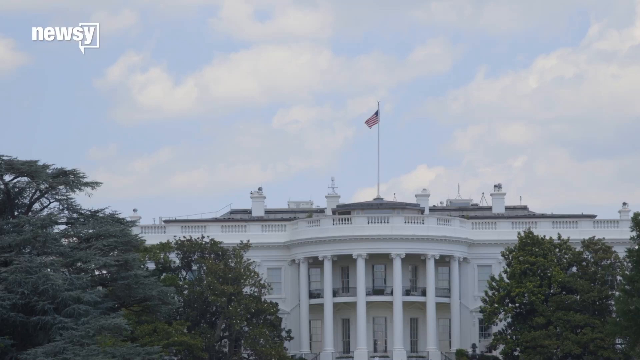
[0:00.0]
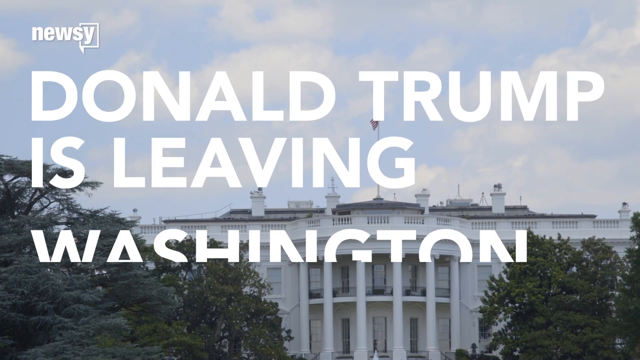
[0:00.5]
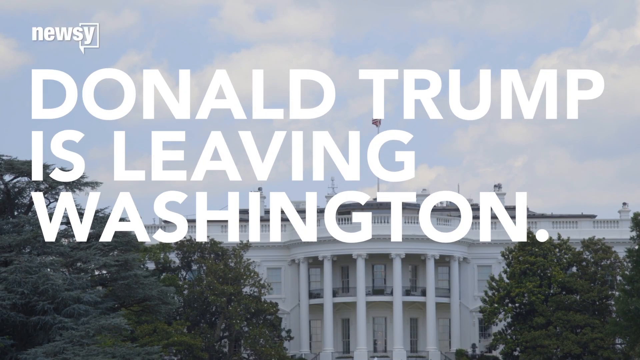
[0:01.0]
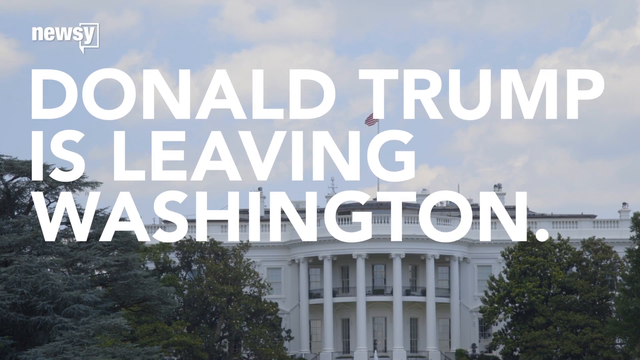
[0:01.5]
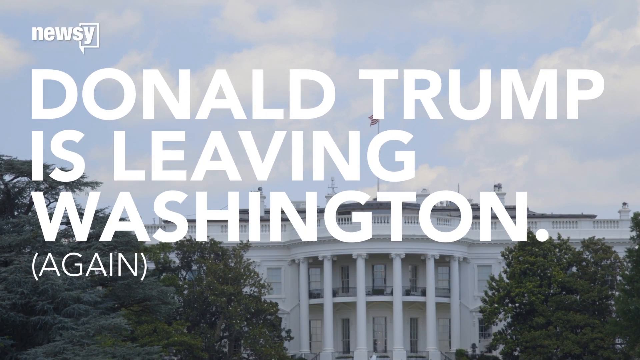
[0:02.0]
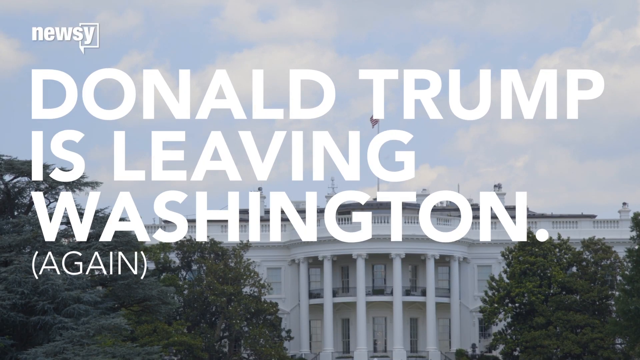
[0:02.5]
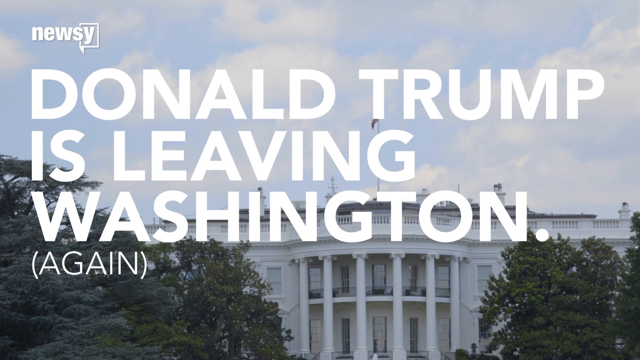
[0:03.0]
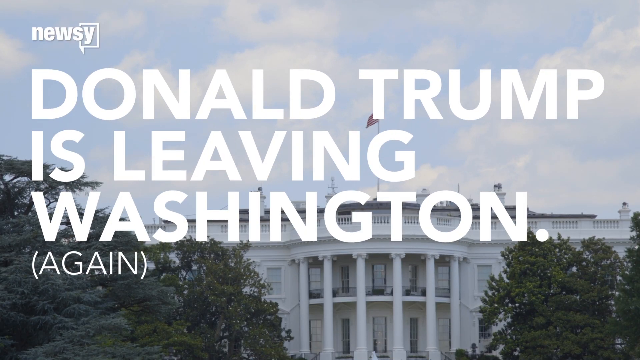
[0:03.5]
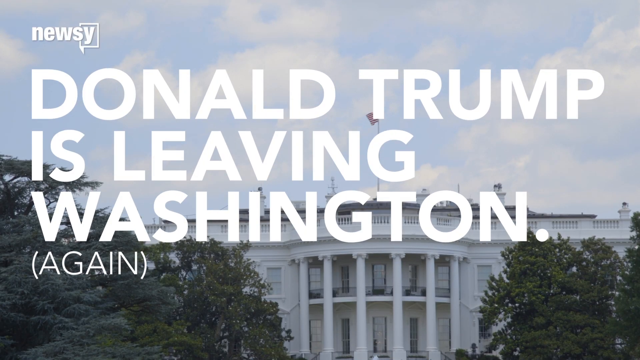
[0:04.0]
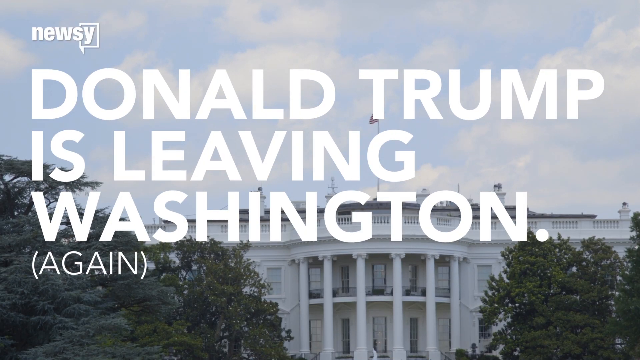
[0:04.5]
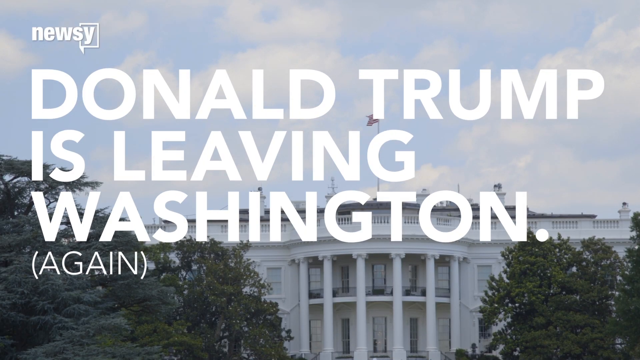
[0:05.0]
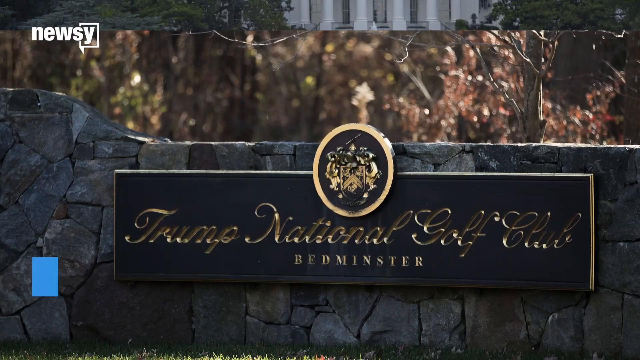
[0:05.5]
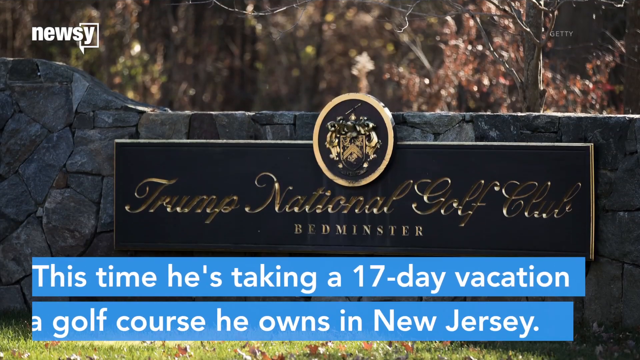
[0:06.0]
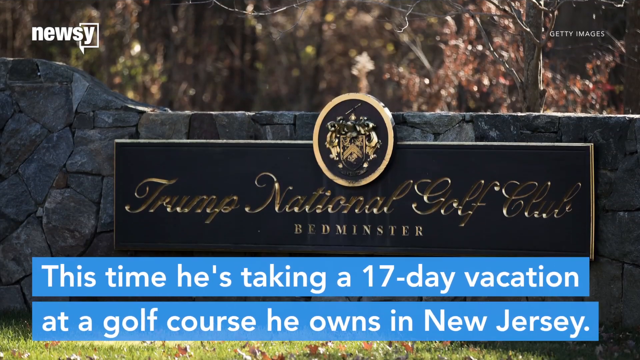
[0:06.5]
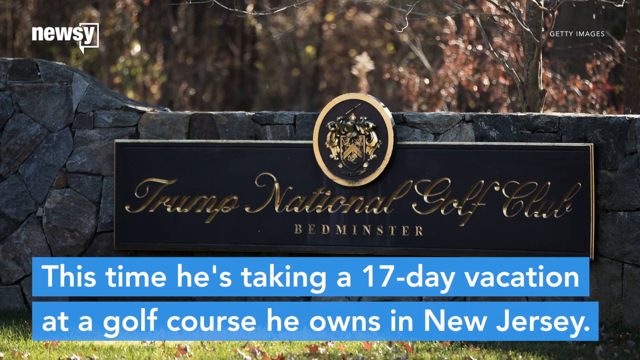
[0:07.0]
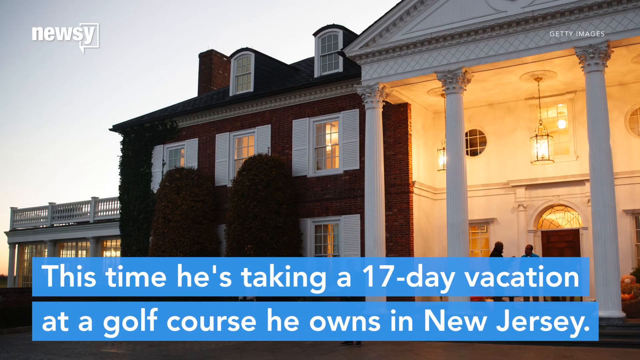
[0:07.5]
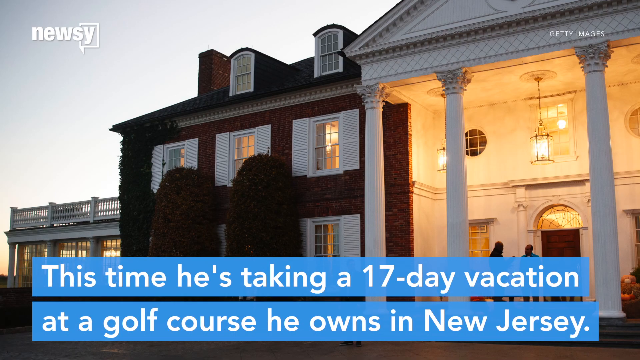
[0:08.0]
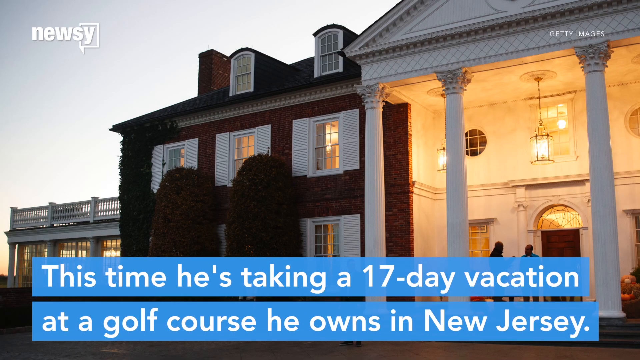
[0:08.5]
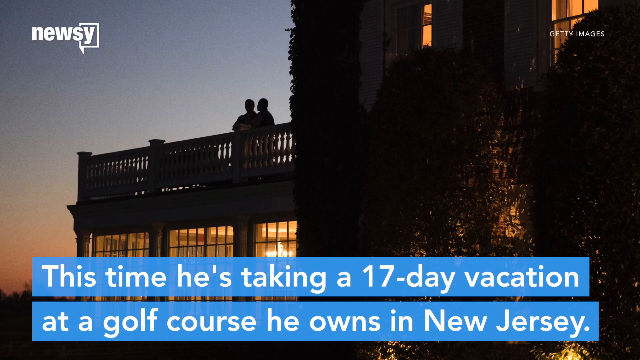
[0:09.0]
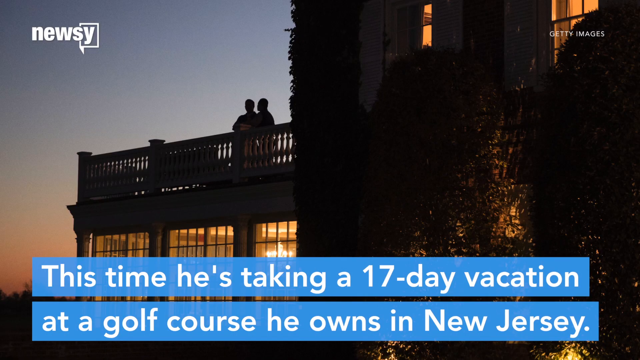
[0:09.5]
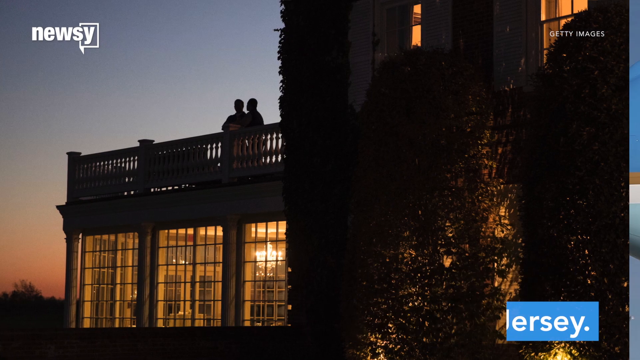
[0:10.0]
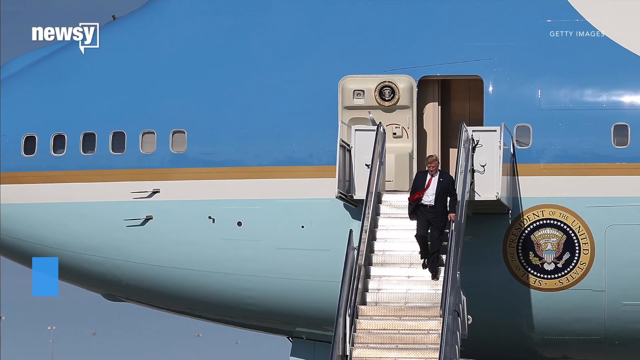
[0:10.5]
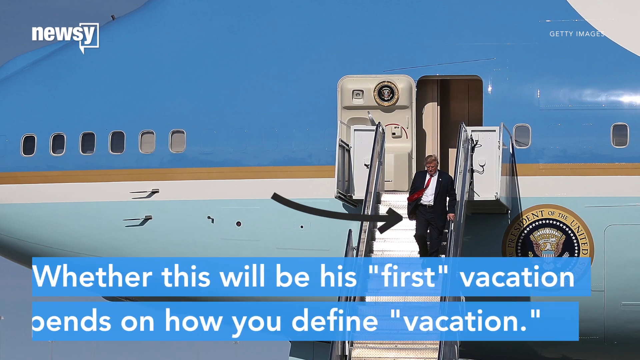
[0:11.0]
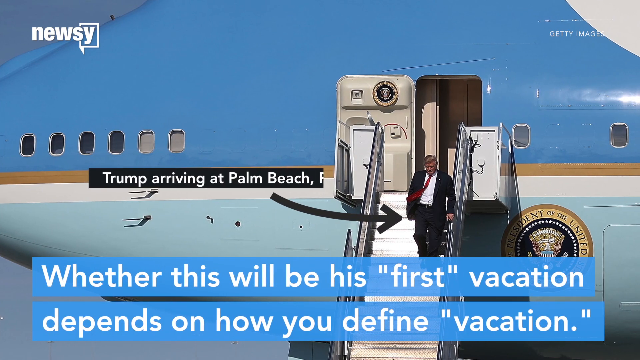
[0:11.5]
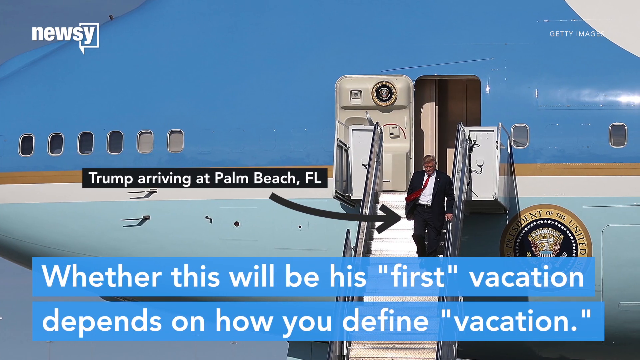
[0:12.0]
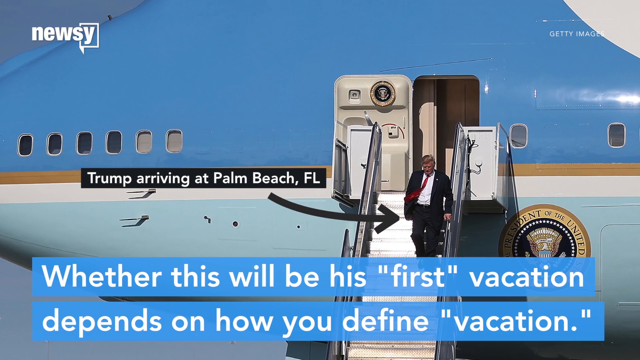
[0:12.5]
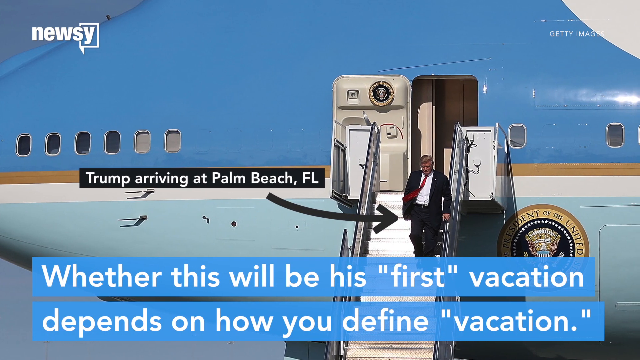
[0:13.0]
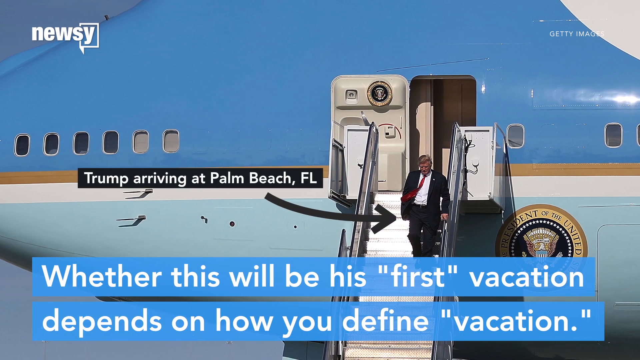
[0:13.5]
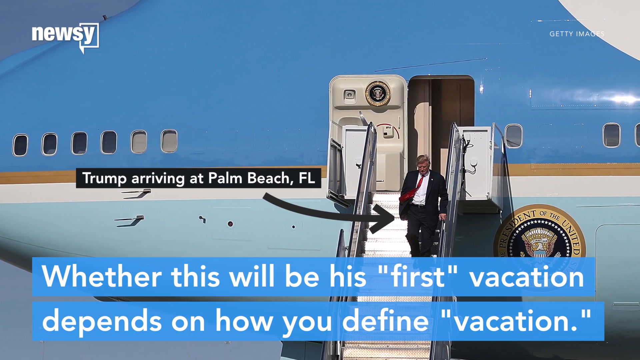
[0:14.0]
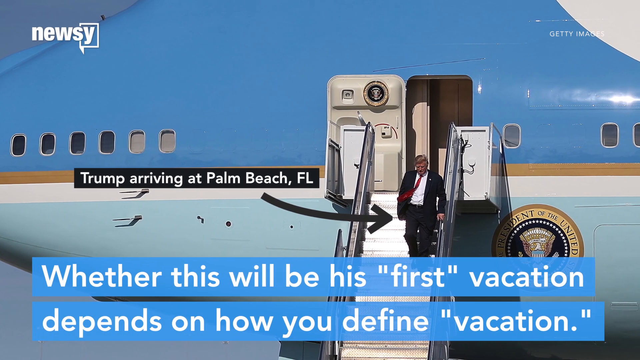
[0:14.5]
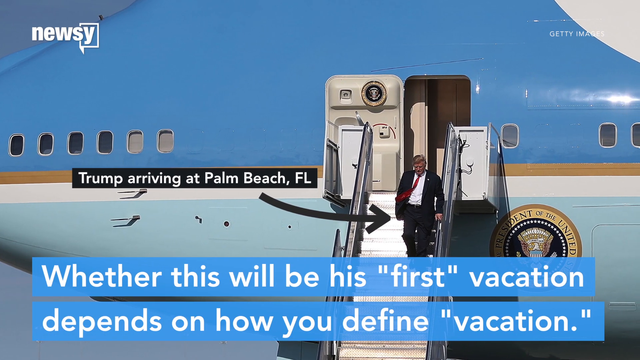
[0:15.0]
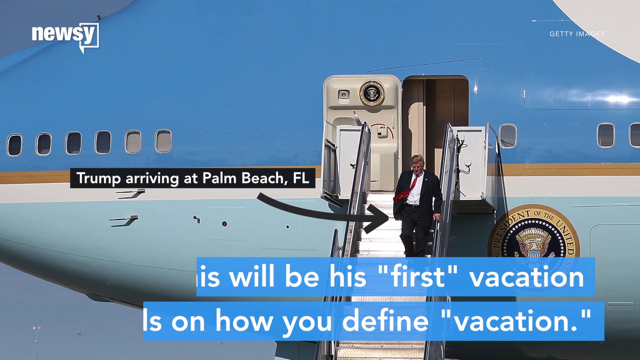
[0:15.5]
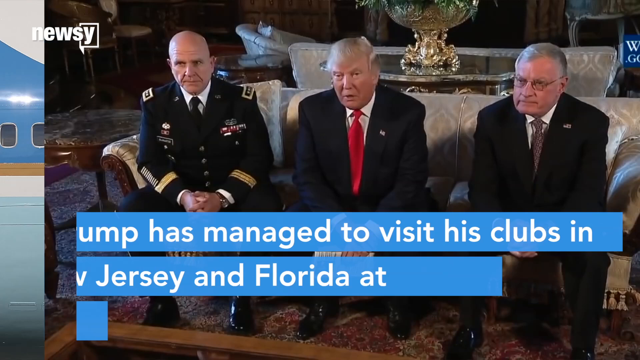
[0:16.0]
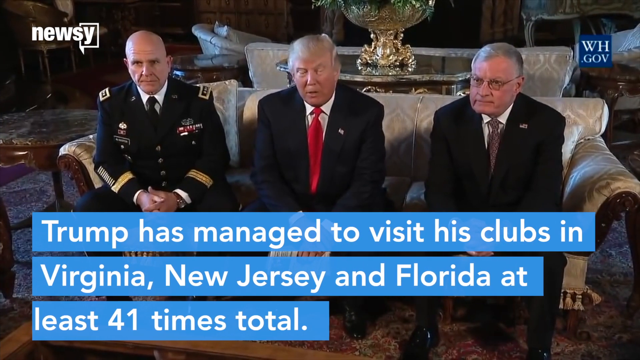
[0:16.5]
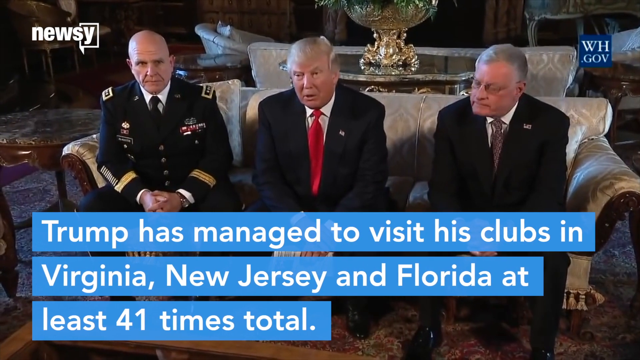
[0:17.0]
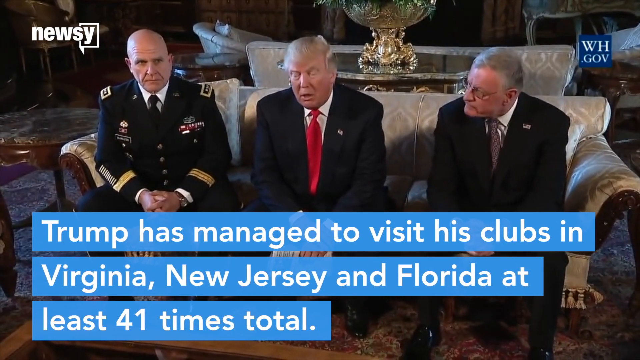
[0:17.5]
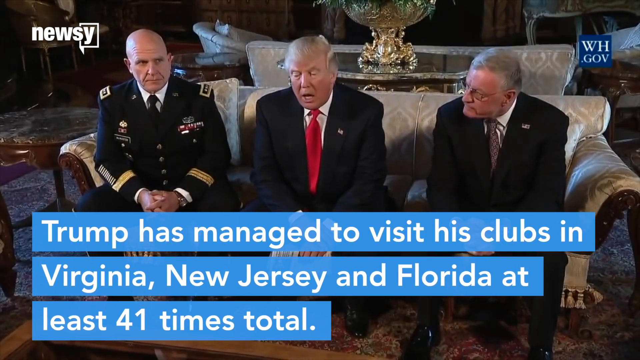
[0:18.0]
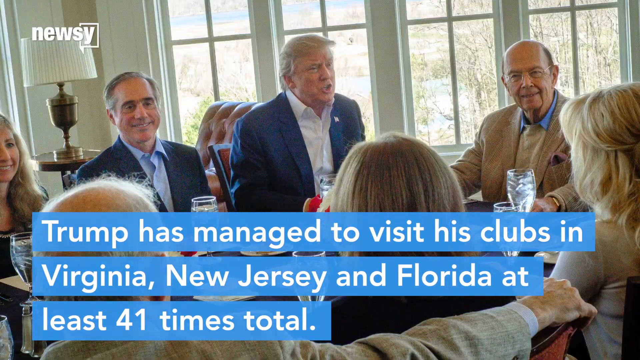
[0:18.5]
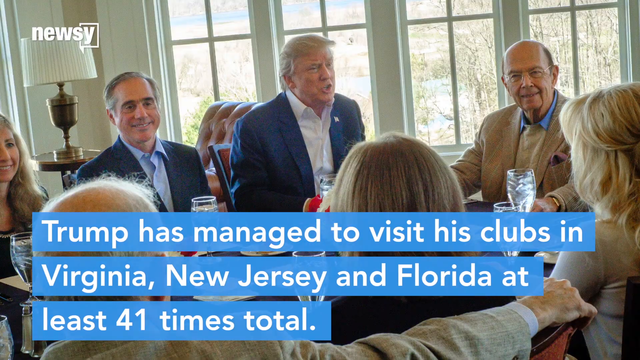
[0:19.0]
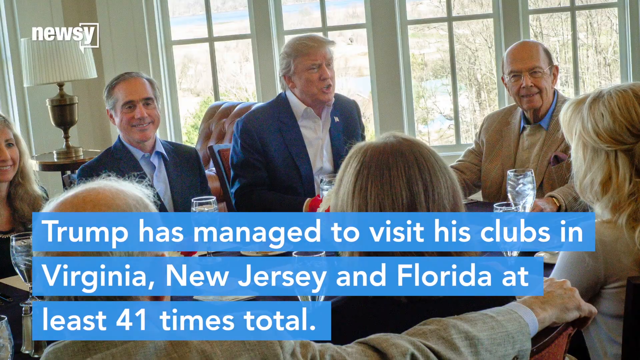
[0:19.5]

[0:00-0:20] A headline reading "Donald Trump is leaving Washington" appears over a background of a white house with trees on either side; the report is from a news outlet called Newsy, and the video focuses on the headline. A logo then appears, showing Trump National Golf Club, with well-designed illustrated words below it, bushes in the background, and a blue caption that reads "this time he's taking a 17-day vacation." The setting changes to a well-decorated room in a very beautiful house. The video then focuses on Air Force One, the airplane that carries the president, and Trump is seen alighting from it. A caption asks whether this will be his first vacation, and another reads "Trump arriving at Palm Beach FL." Next, Trump is shown with a group of people, talking to them, under a caption that reads "Trump has managed to visit his clubs in Virginia, New Jersey and Florida."